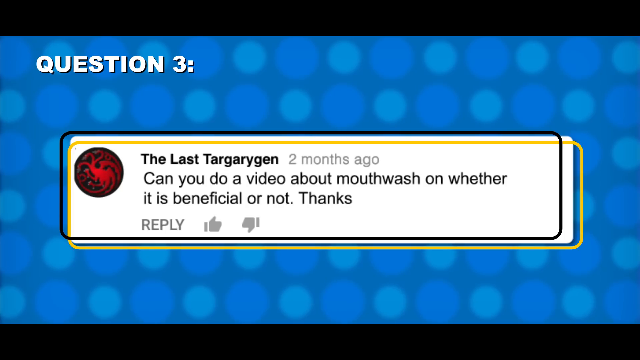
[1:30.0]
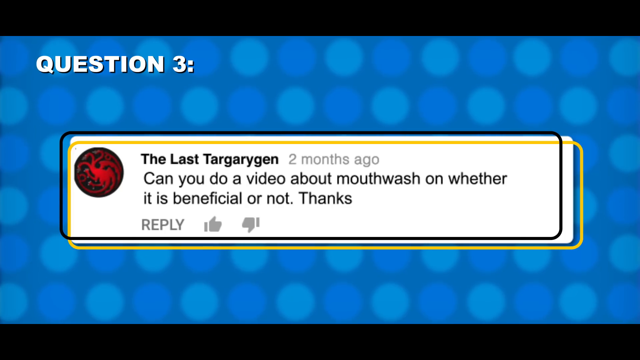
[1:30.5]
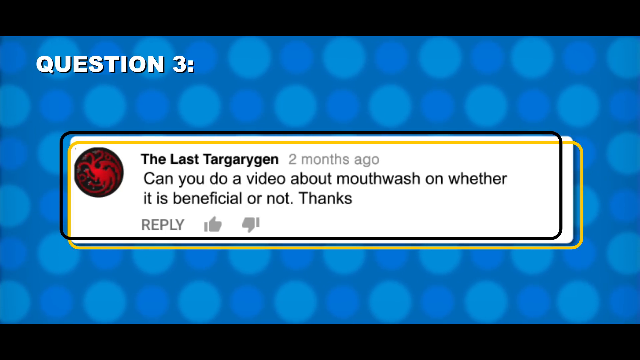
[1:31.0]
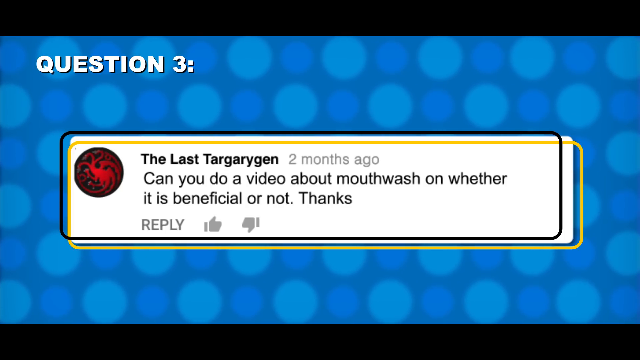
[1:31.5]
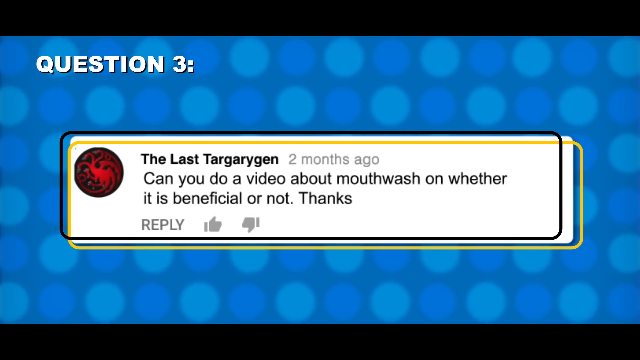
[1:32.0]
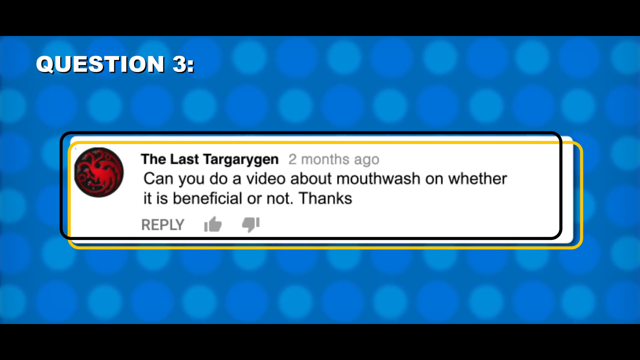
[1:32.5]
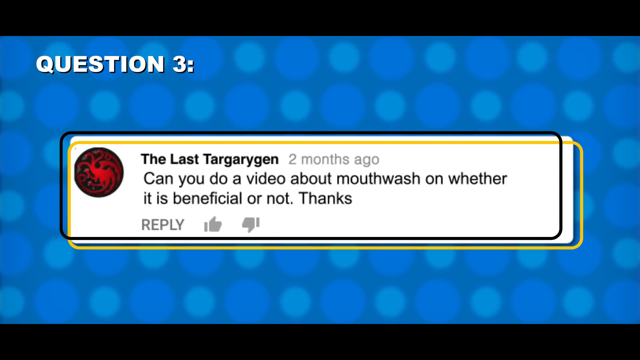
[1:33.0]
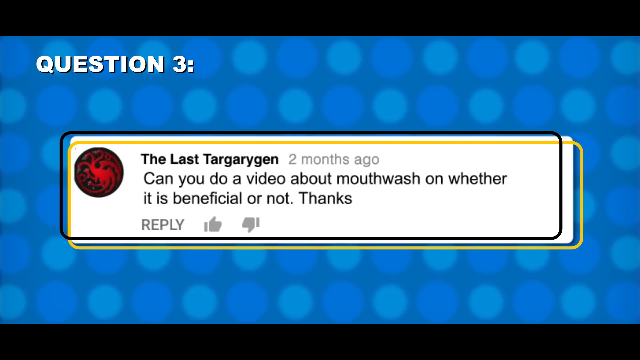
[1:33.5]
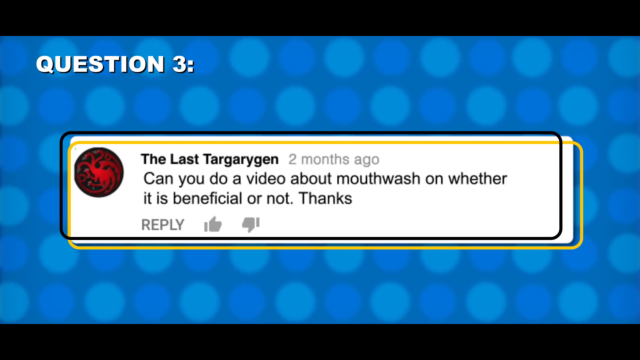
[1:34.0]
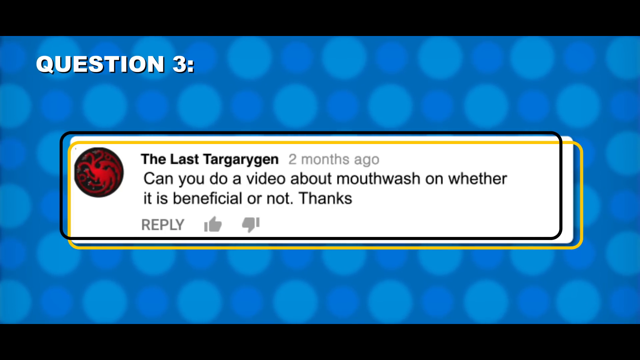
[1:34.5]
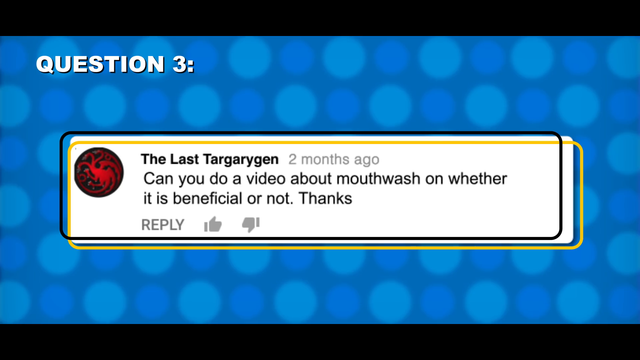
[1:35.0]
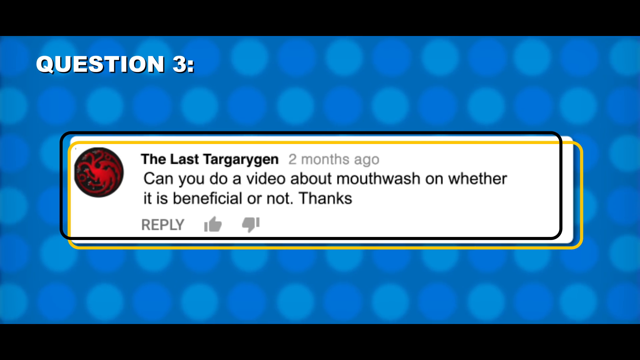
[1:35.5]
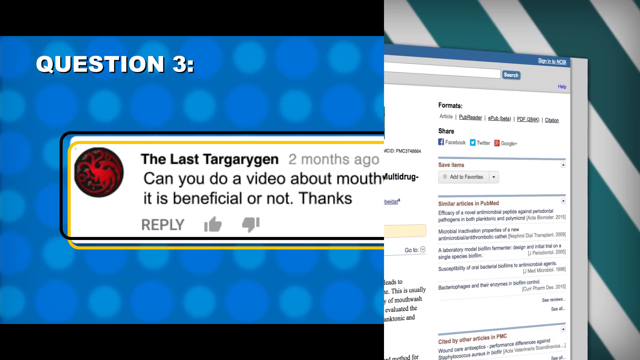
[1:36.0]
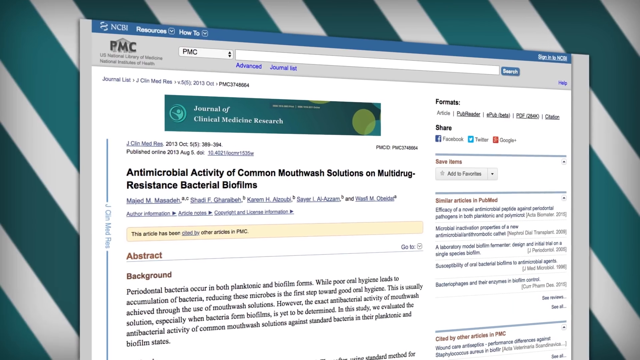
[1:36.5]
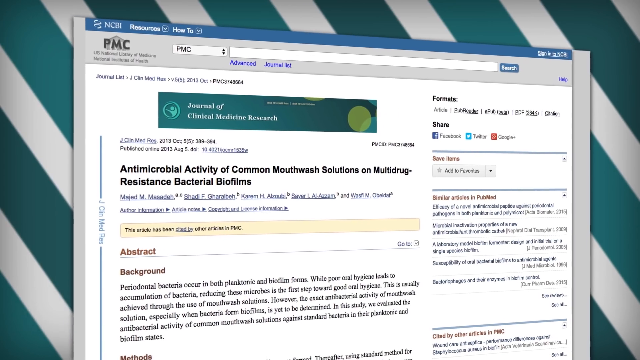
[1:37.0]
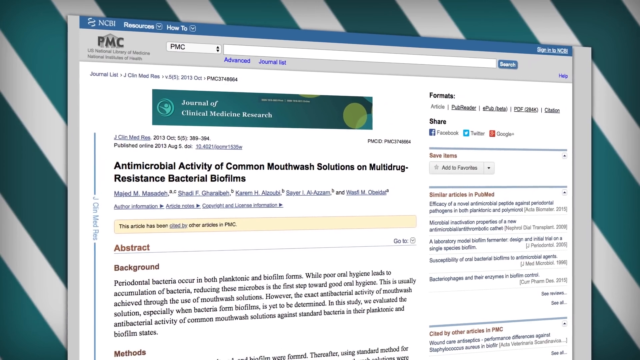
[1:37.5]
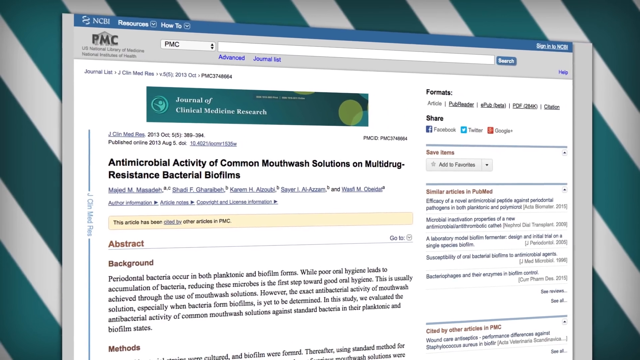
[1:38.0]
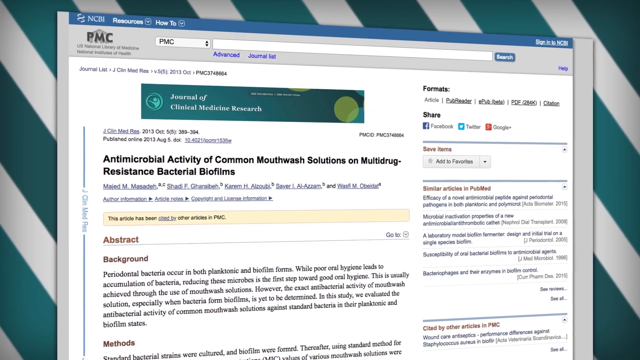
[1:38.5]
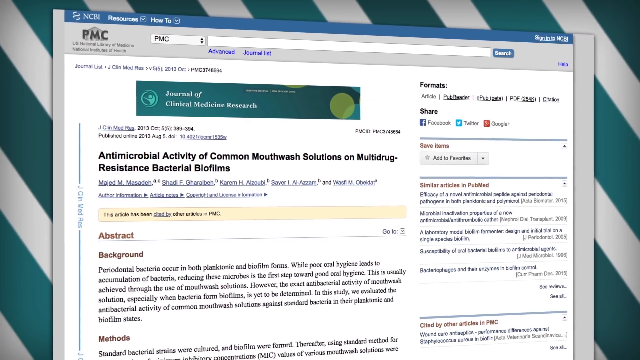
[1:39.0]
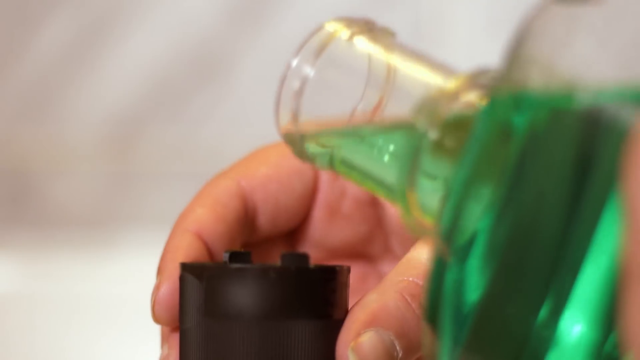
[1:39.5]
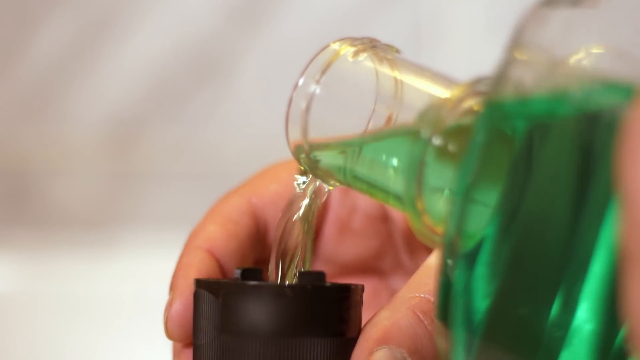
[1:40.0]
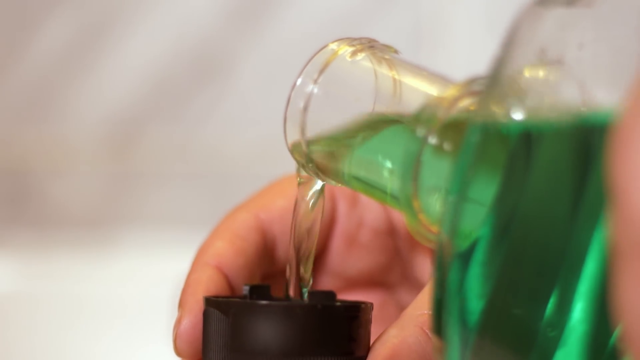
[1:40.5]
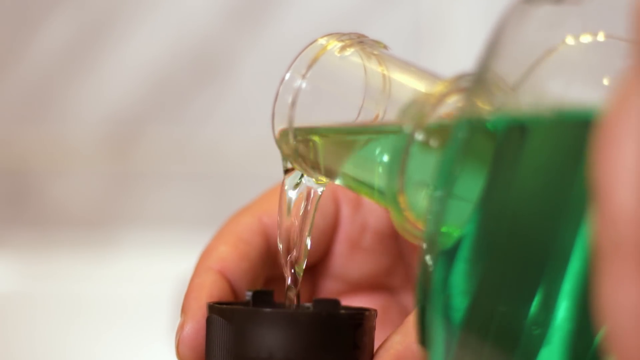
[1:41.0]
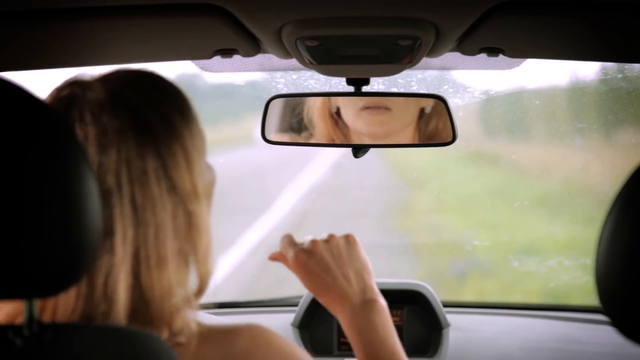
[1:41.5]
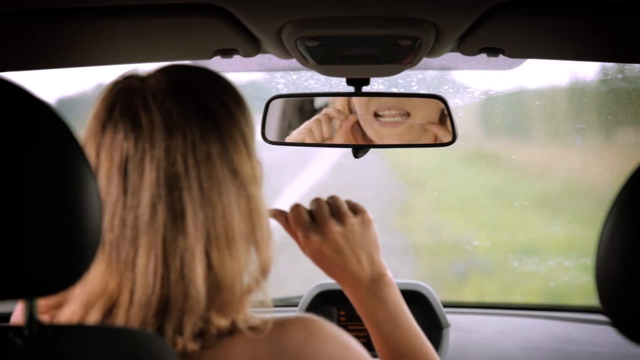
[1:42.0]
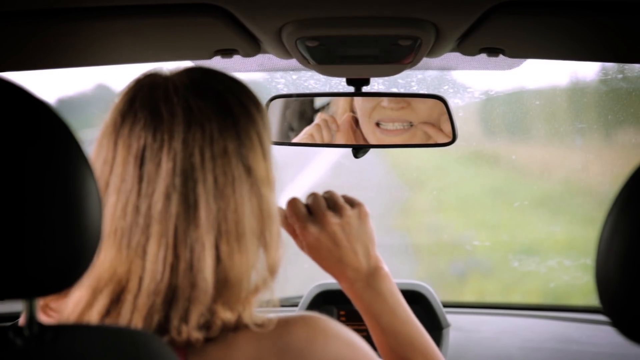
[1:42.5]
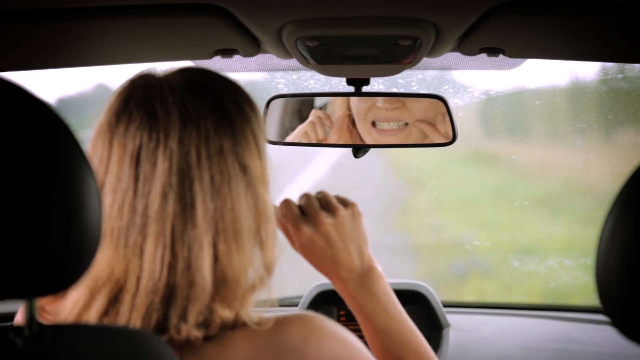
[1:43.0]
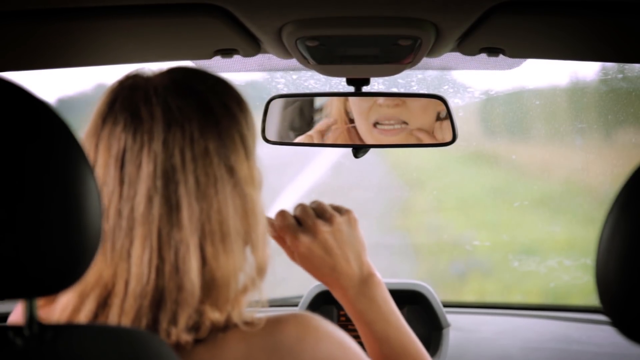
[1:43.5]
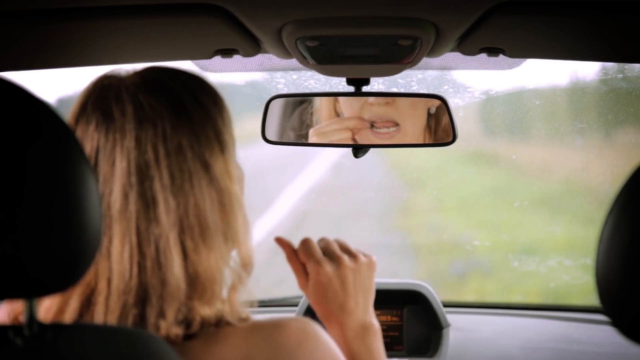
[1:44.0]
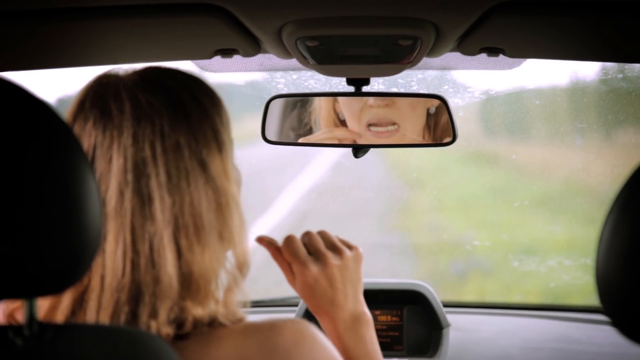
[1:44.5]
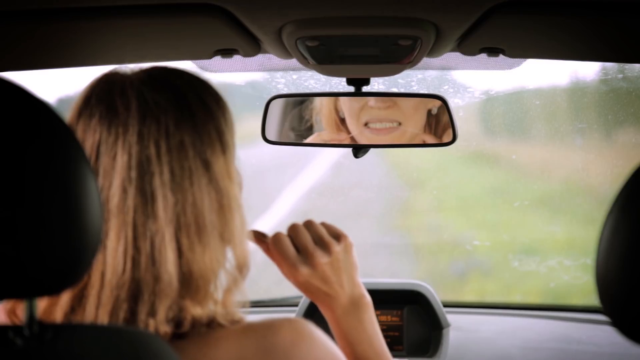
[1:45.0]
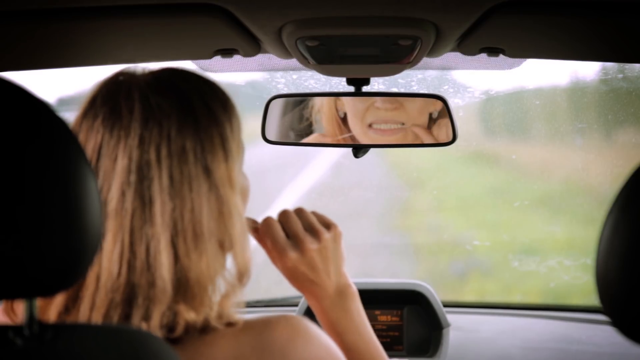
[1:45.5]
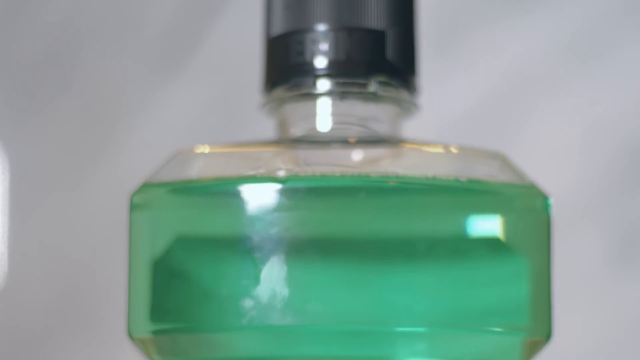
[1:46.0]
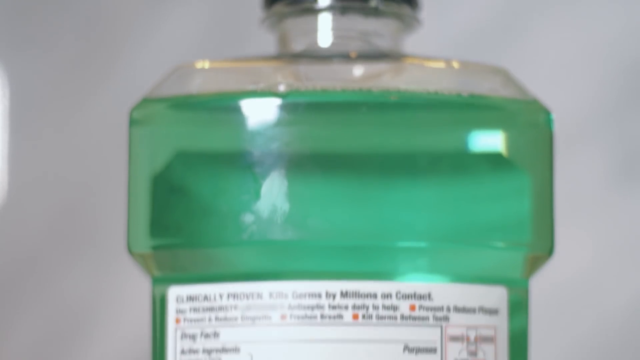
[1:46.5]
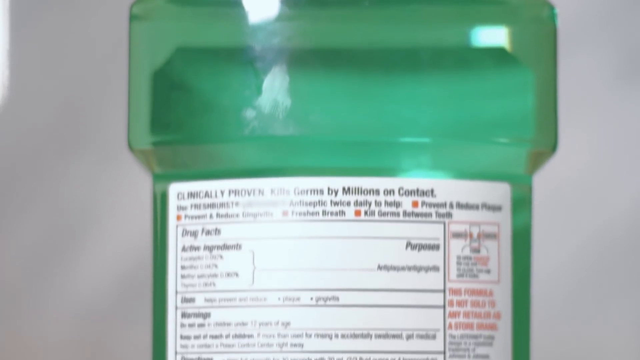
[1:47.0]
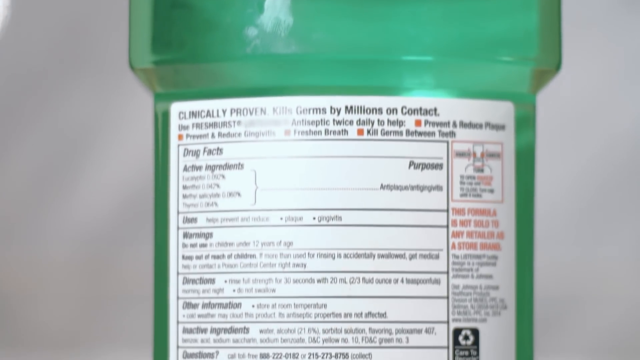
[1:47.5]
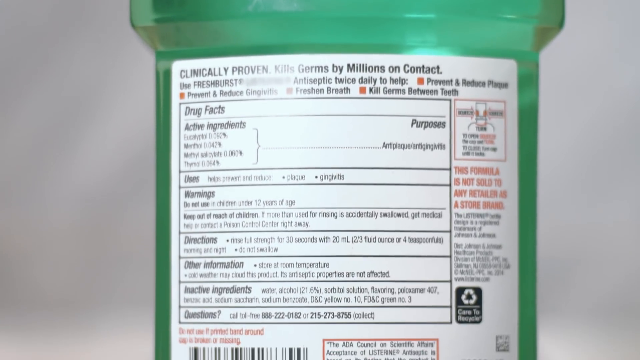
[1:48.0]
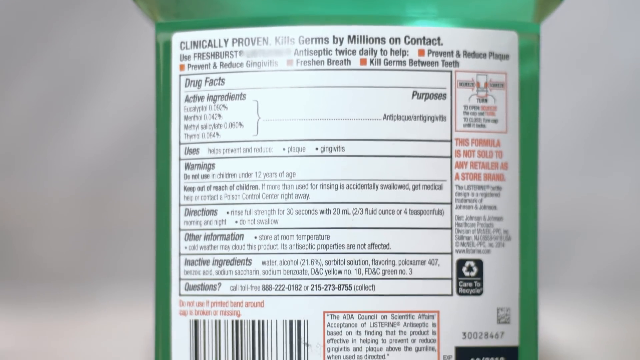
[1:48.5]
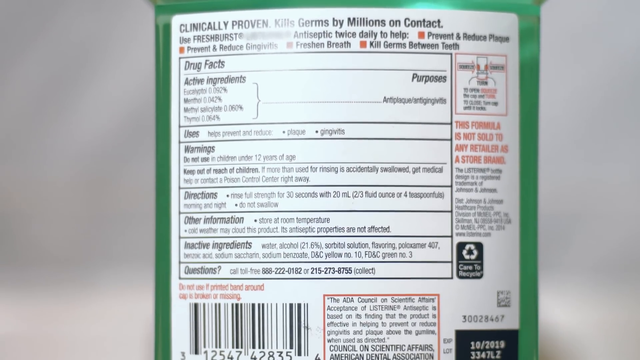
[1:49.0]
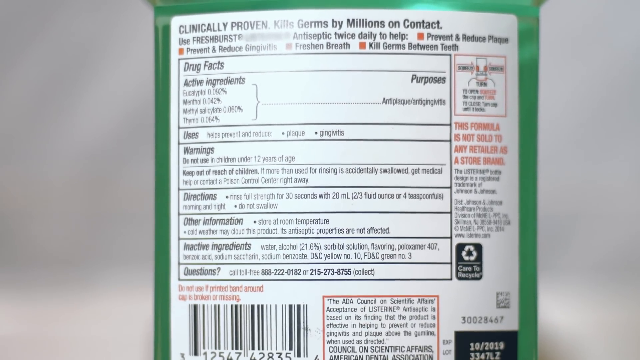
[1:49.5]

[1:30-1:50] Question number three is on the screen: "can you do a video about mouthwash on whether it is beneficial or not? Thanks." A website is shown rotating against a background of blue and white diagonal stripes; as it rotates, its title can be read: "Anti-microbial activity of common mouthwash solutions on multi-drug resistant bacterial biofilms". The screen changes to someone pouring green mouthwash into a black cap, with a hand holding each of them. After it is poured, a woman is shown looking in the rear view mirror of her car, getting ready to floss her teeth. She flosses for a few moments, and then a bottle of mouthwash is shown. The camera scrolls down slowly onto the back label of the mouthwash, where the ingredients and instructions are listed.